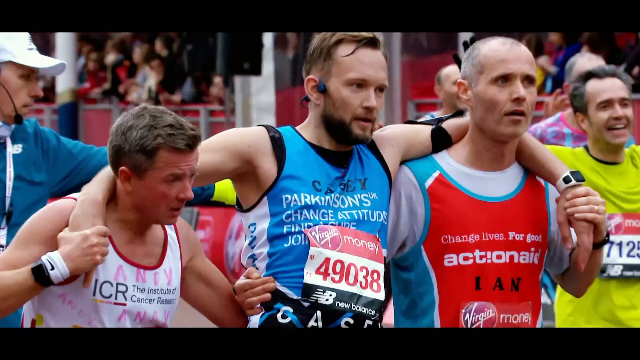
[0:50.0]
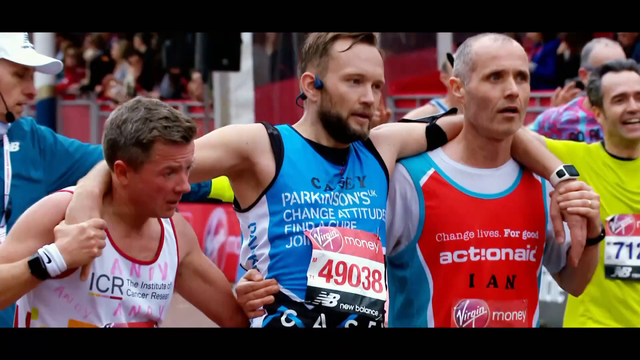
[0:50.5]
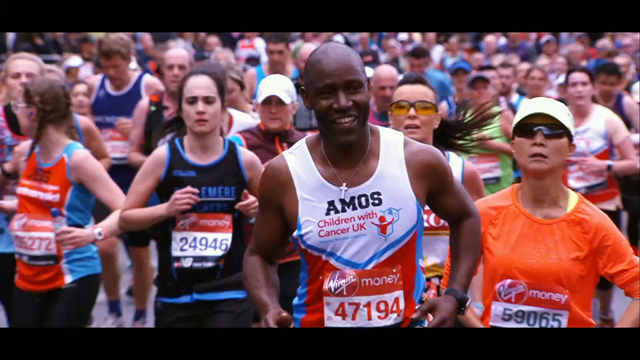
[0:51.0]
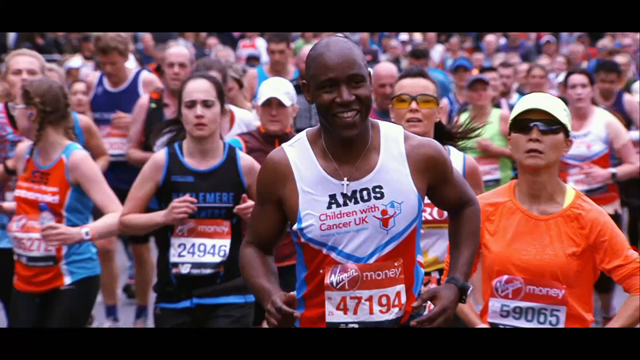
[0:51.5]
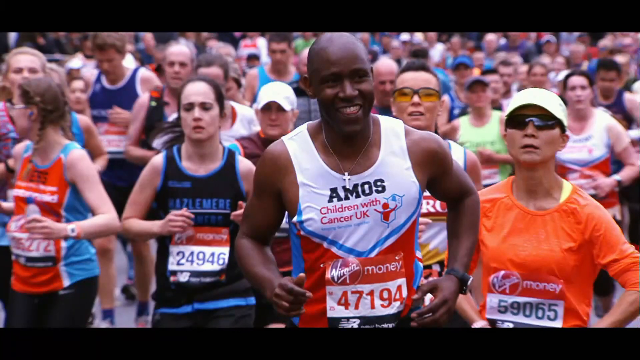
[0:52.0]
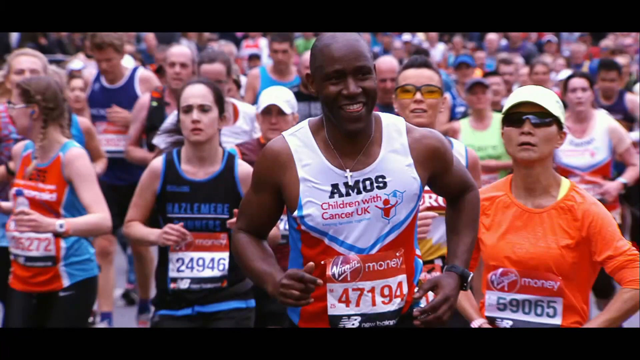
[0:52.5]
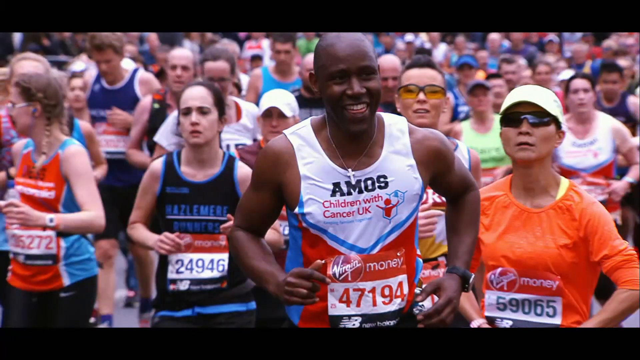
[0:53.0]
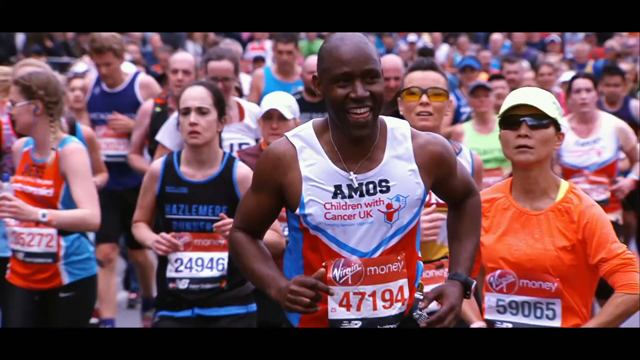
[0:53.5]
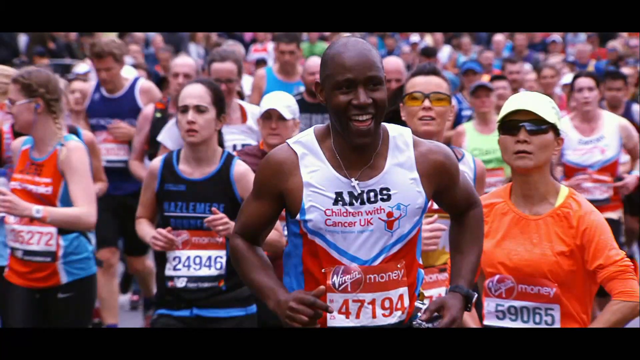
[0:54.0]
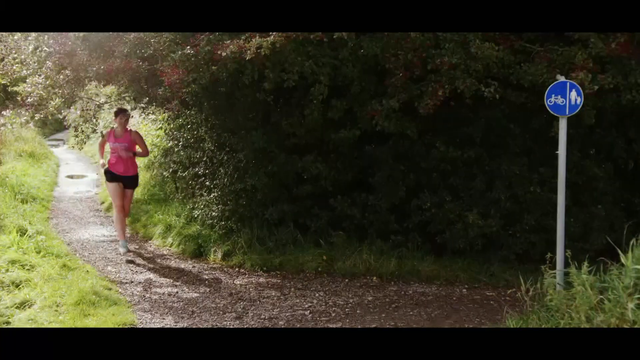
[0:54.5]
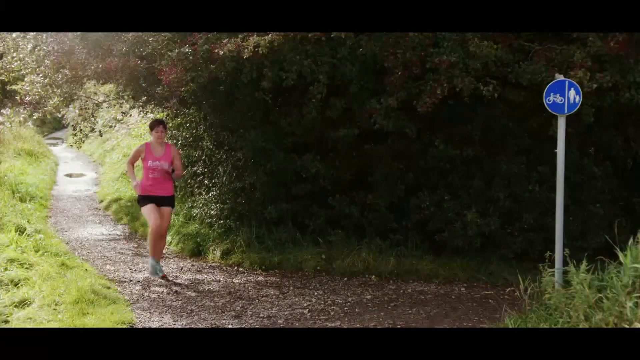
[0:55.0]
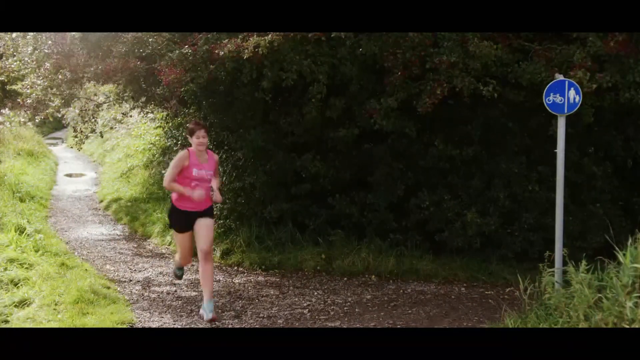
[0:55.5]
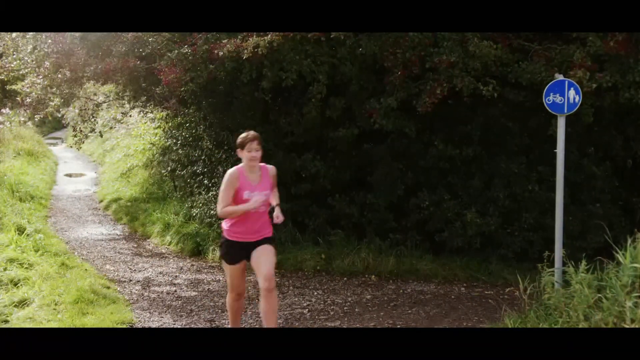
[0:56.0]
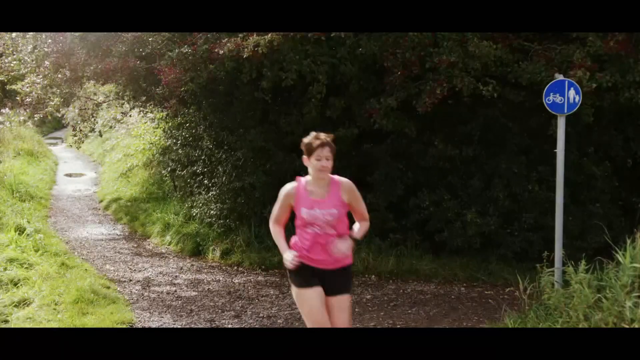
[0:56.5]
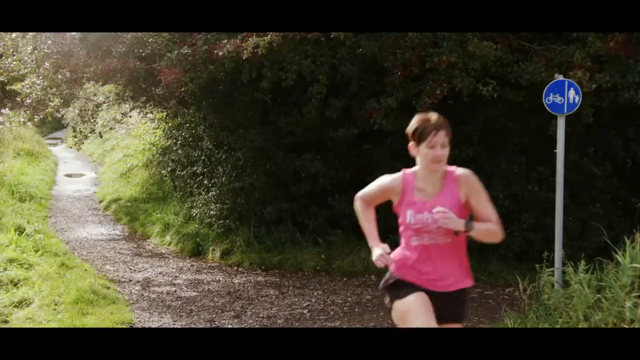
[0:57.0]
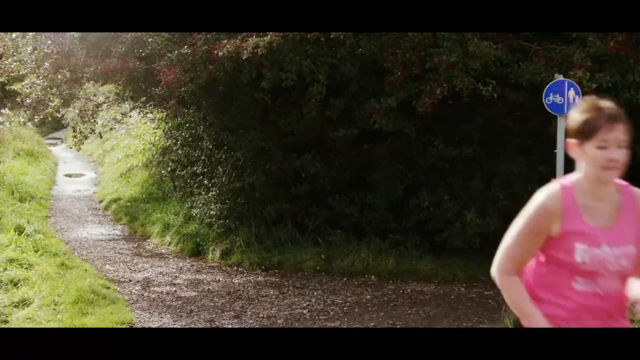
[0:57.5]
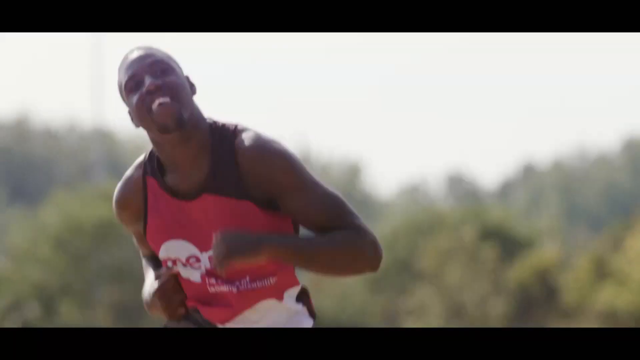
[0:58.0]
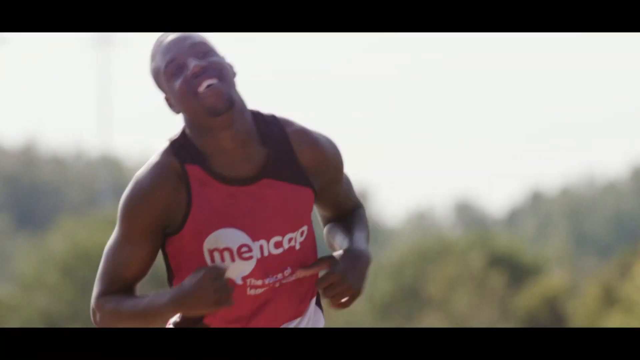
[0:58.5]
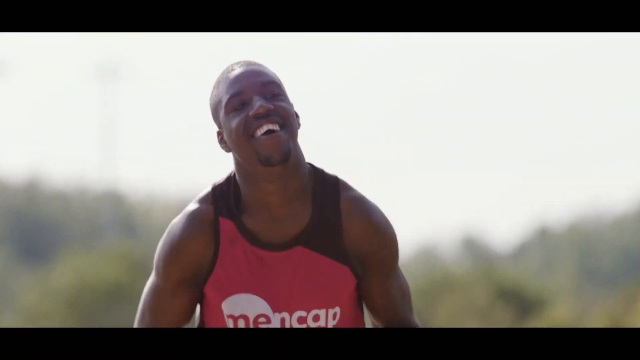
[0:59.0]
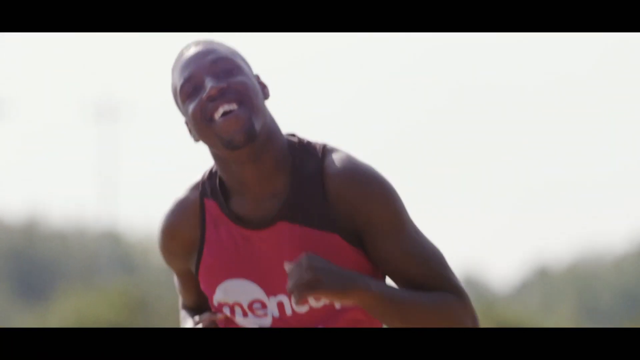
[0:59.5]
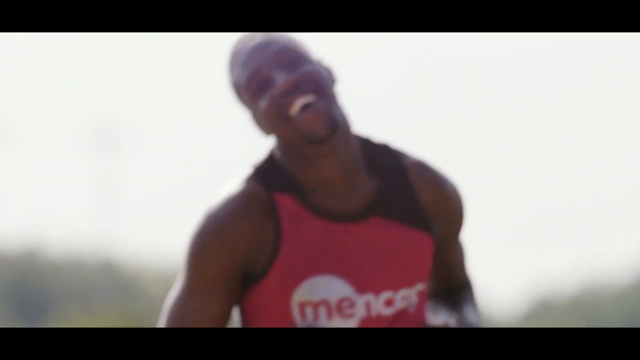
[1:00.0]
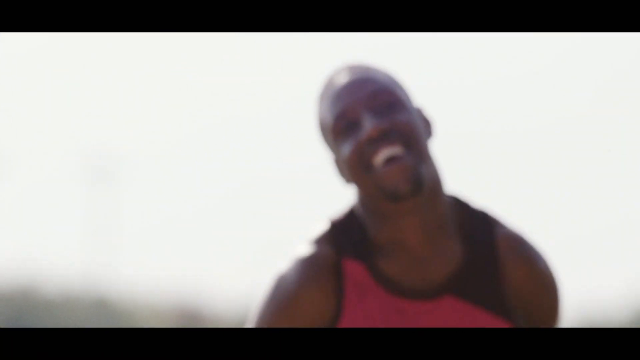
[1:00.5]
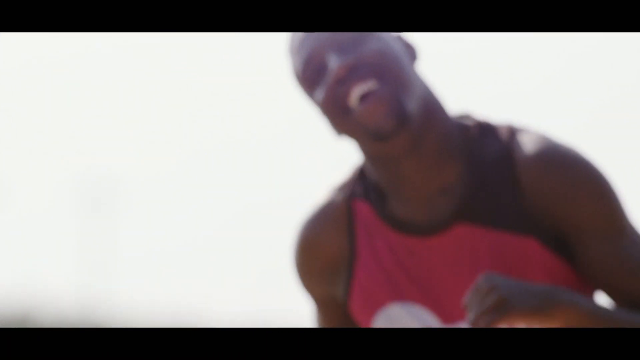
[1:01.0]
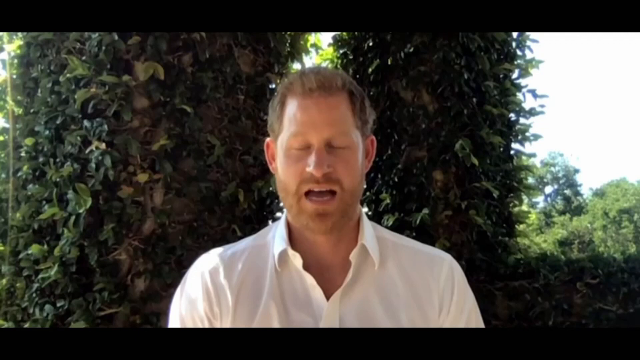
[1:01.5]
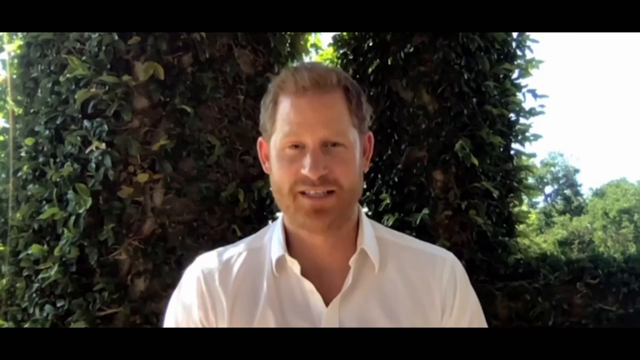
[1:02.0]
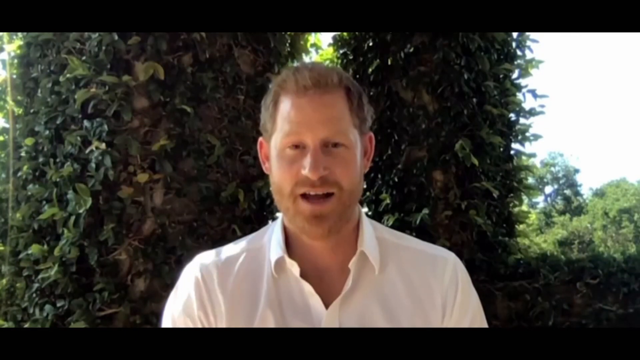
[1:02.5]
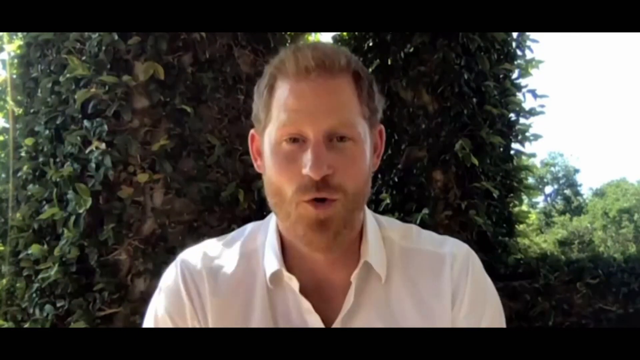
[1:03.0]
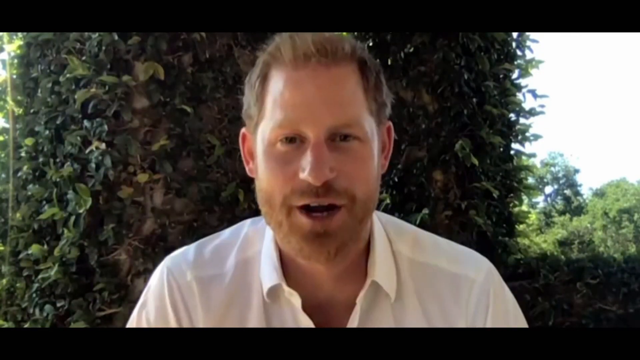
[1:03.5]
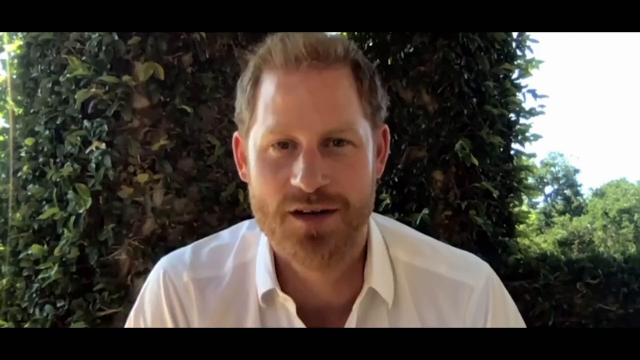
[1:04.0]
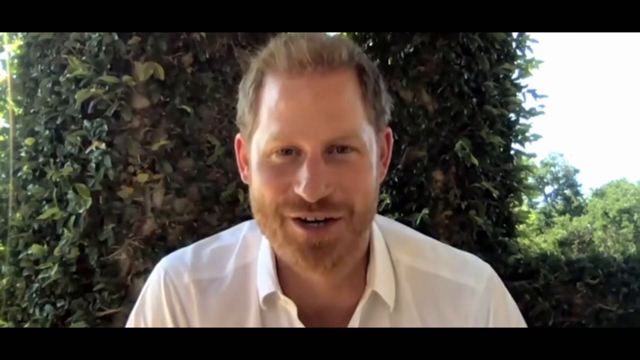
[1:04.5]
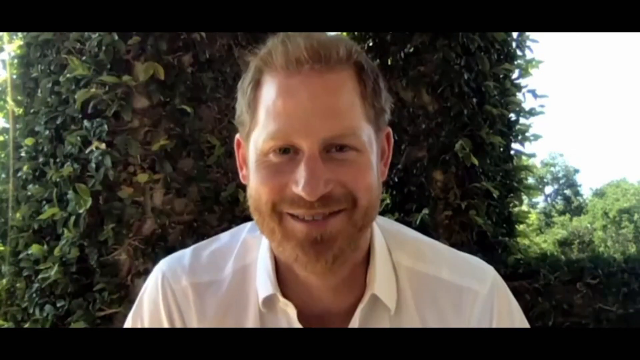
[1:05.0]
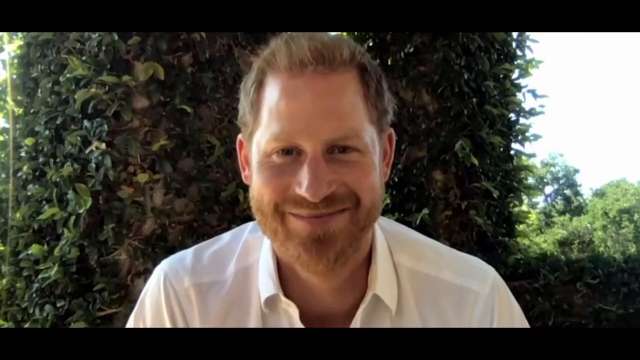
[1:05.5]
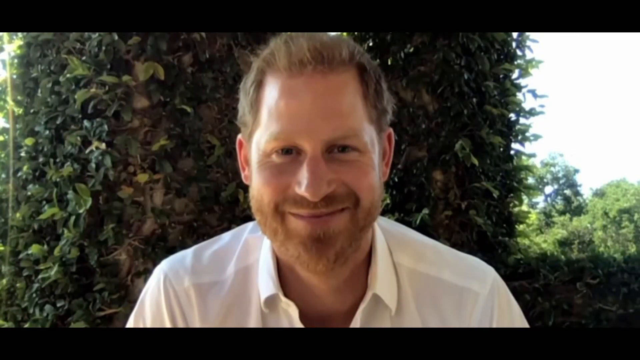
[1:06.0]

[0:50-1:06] The runners try to support their friend as they run in slow motion toward the finish line. To the far right of the group is a white man with short gray hair. Behind them is a man wearing a teal long-sleeve windbreaker and a white baseball cap, and to the left of the group is another man wearing a teal long-sleeve windbreaker and a white baseball cap. Another angle of the race shows lots of people. At the front is a very muscular, bald black man wearing a cross around his neck and a white, red and blue shirt that reads "Amos, Children with Cancer UK". To his right is an Asian woman in sunglasses and an orange t-shirt. To his left is a white woman with a large forehead and her hair pulled back, wearing a black and blue jersey, and to her right is another white woman whose head is turned to the left, revealing braided hair; she wears an orange and blue shirt. They continue running in slow motion. The scene changes to a white woman with short brown hair in a pink shirt and black shorts running in the forest toward the camera at normal speed, no longer in slow motion. To the far right is a blue sign showing a bike, a line, and a person holding another person's hand. Next, a muscular black man in a red shirt with a black and white design runs in slow motion, his head bent to the left, against a blurred background showing the outline of trees and a sky. The video then shows the same white man as before, with a white collared shirt, red beard and large ears, with trees and leaves behind him. He begins to talk, leans in toward the camera and smiles as the video ends.